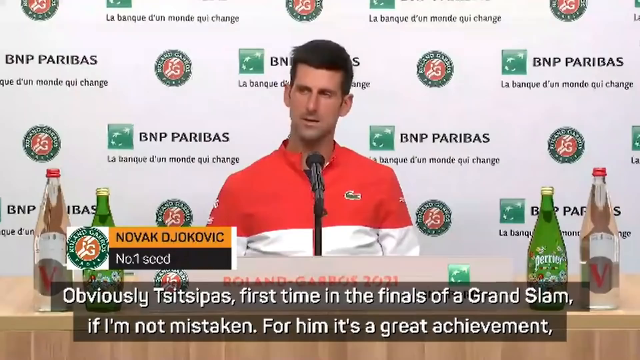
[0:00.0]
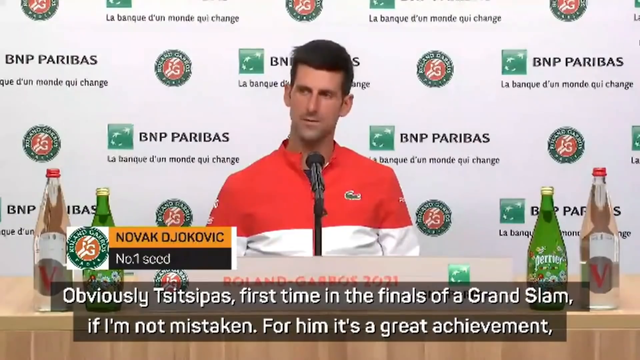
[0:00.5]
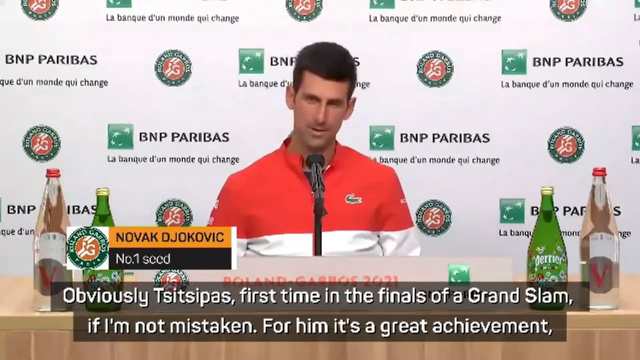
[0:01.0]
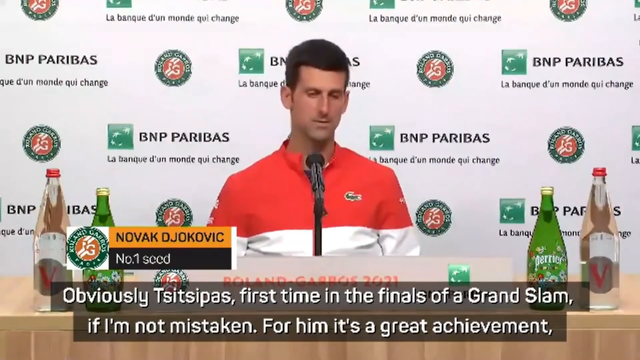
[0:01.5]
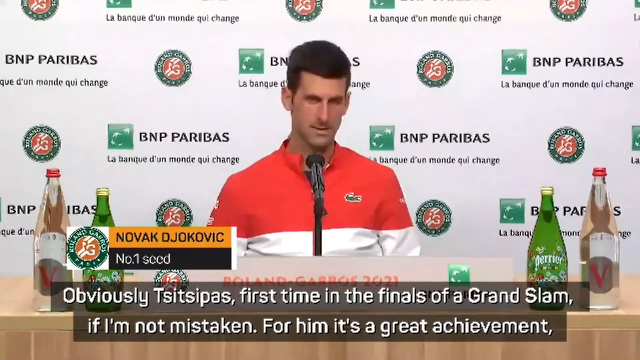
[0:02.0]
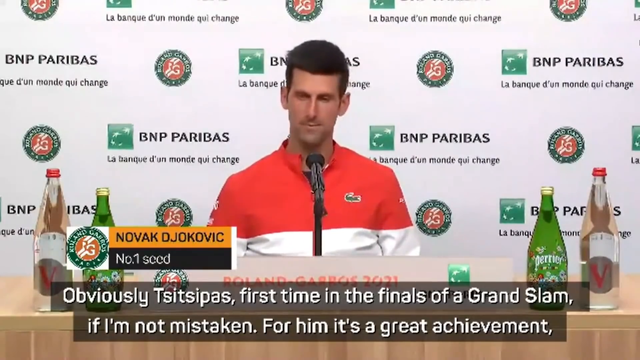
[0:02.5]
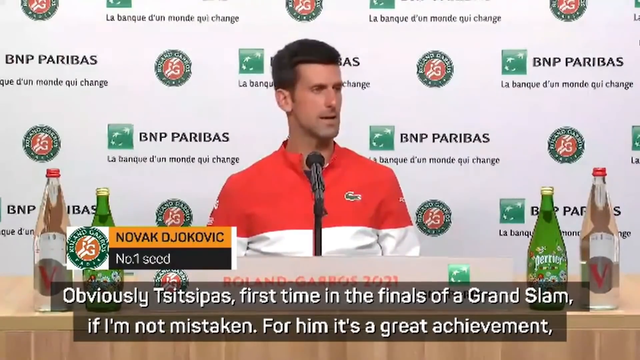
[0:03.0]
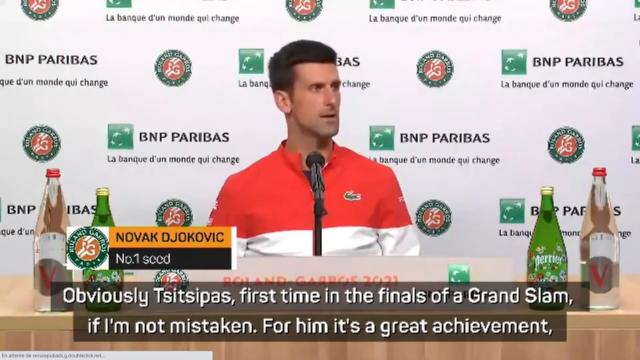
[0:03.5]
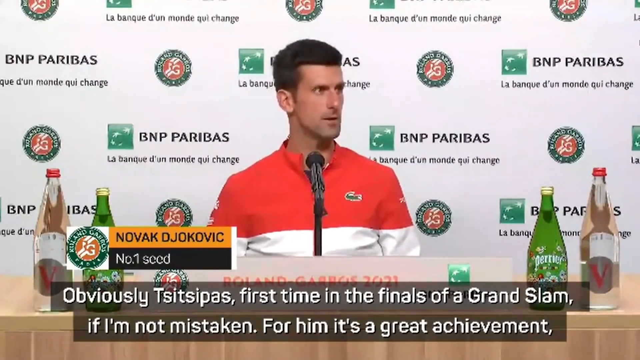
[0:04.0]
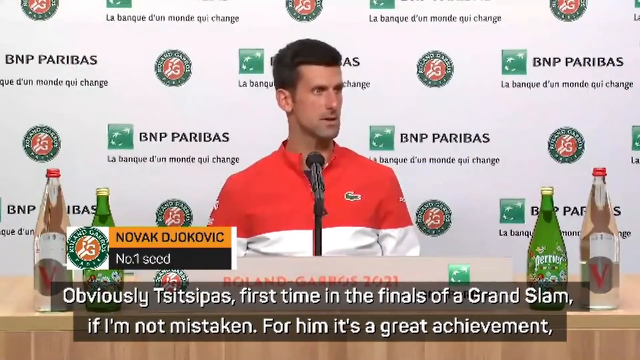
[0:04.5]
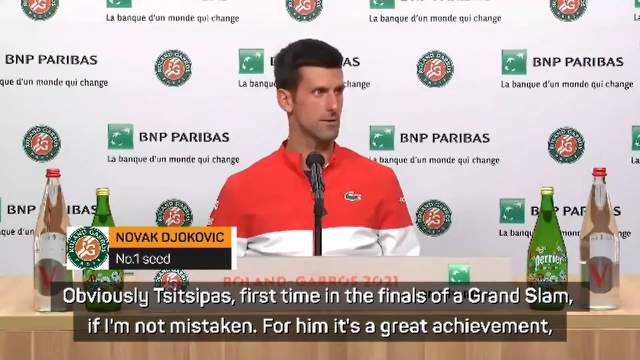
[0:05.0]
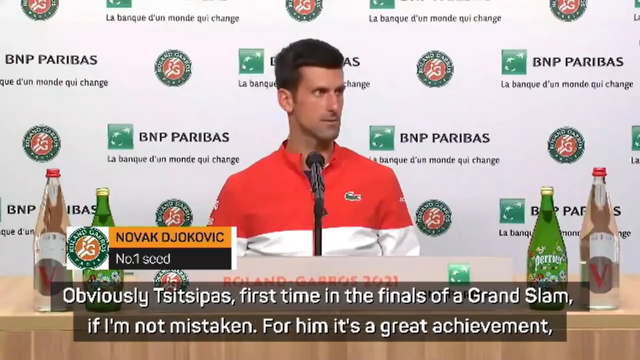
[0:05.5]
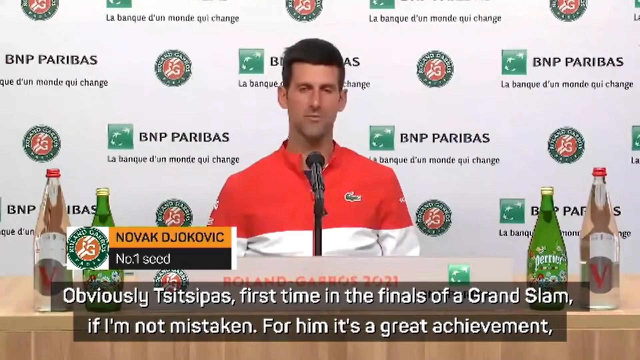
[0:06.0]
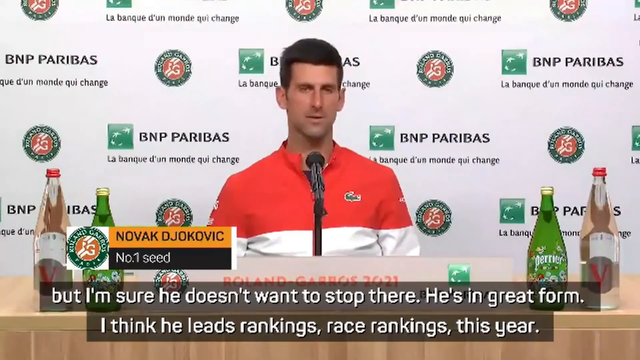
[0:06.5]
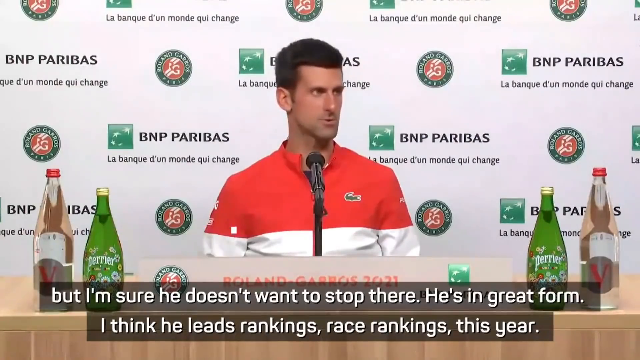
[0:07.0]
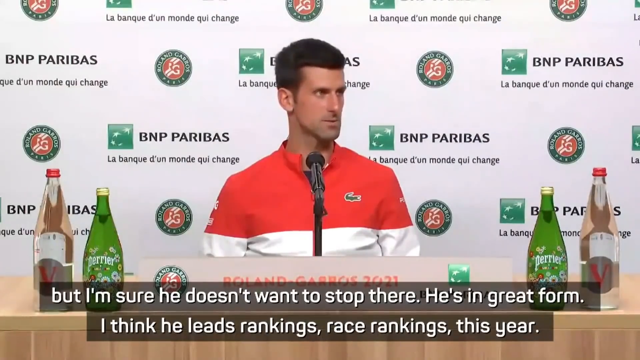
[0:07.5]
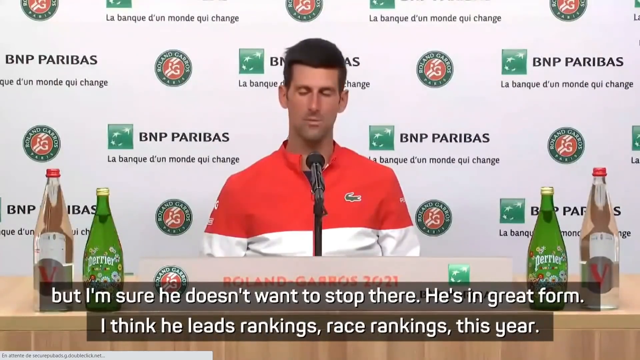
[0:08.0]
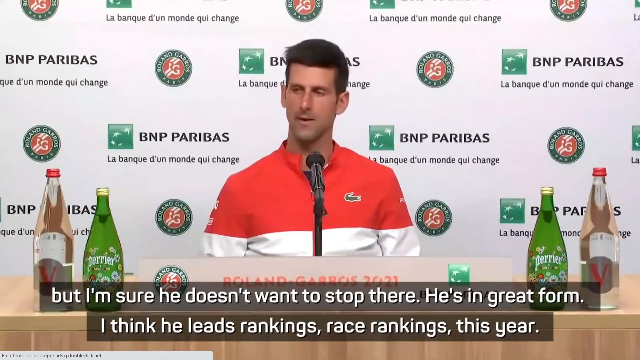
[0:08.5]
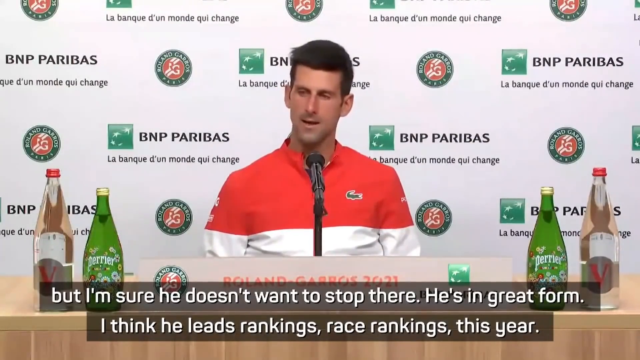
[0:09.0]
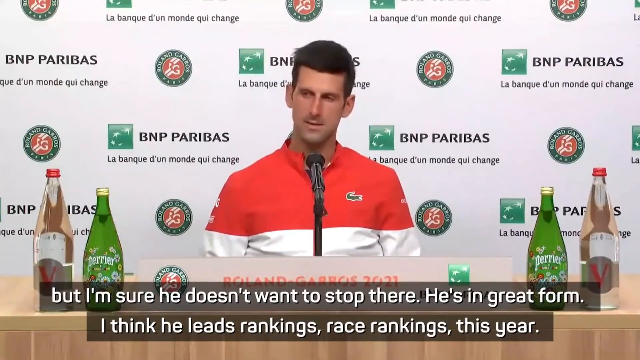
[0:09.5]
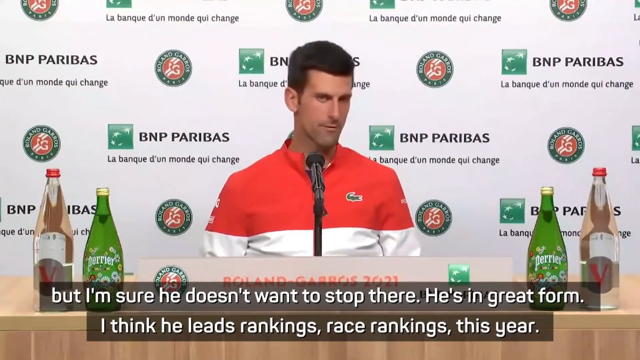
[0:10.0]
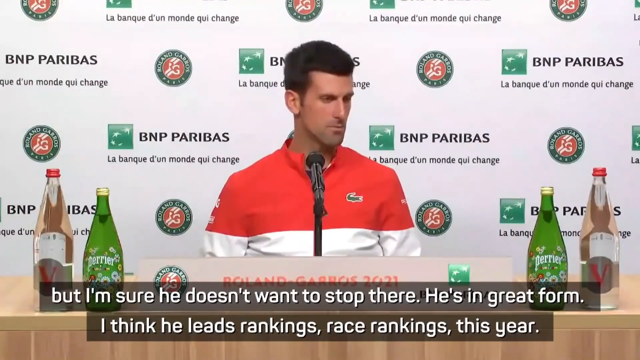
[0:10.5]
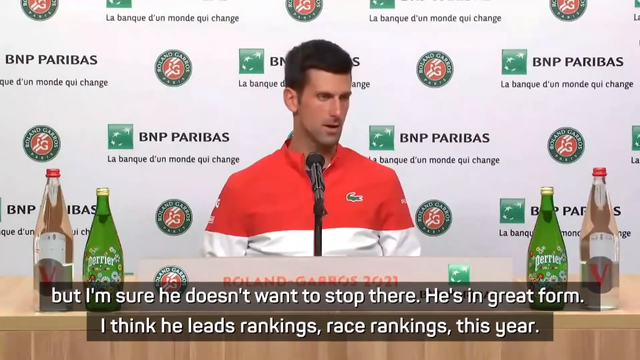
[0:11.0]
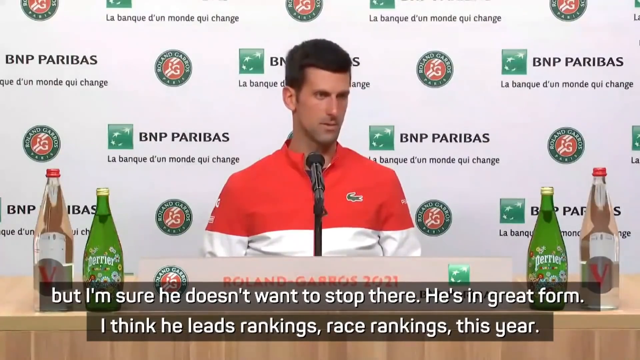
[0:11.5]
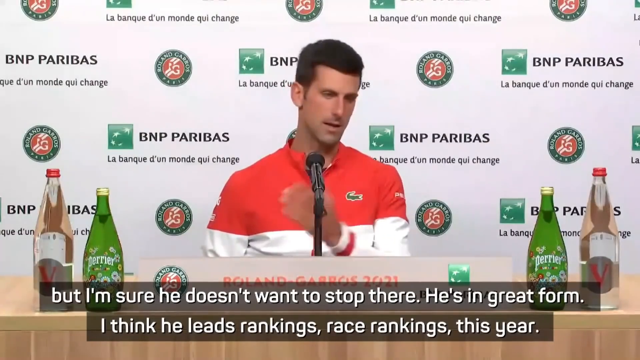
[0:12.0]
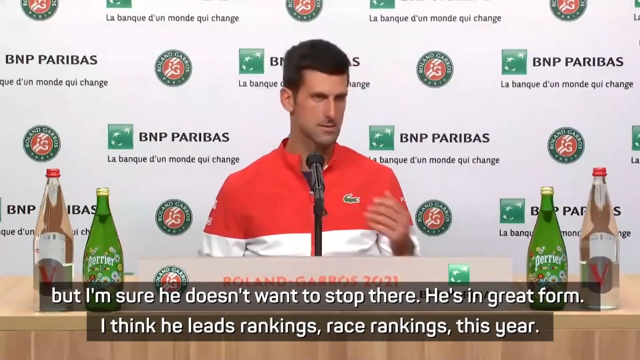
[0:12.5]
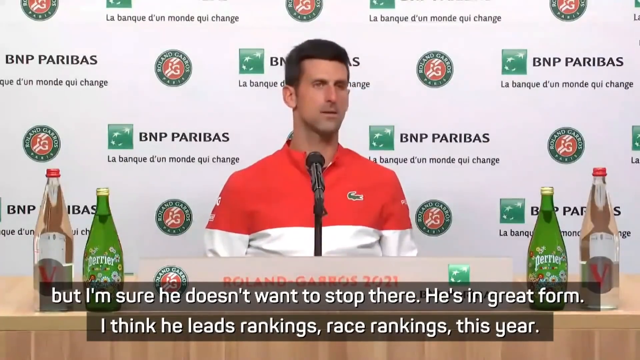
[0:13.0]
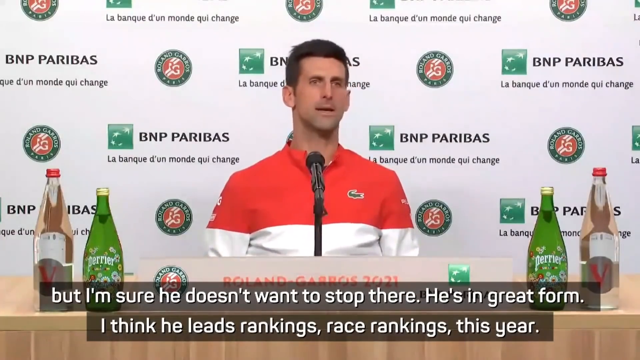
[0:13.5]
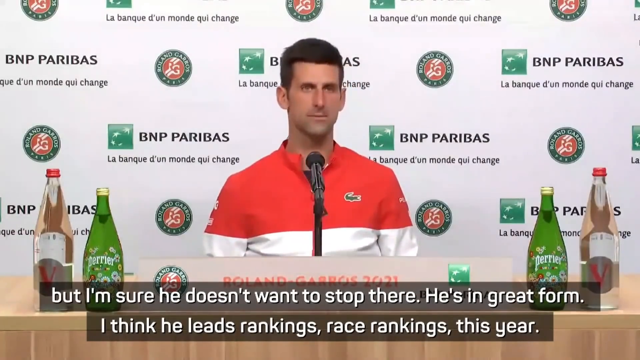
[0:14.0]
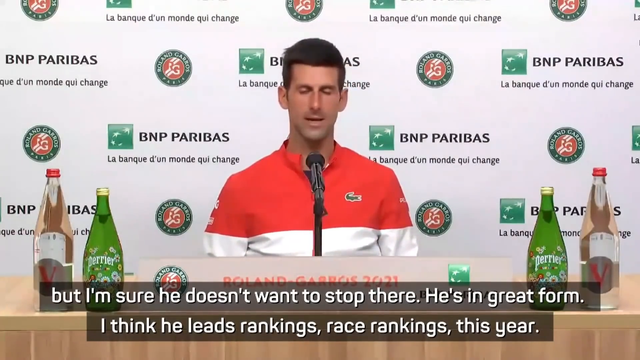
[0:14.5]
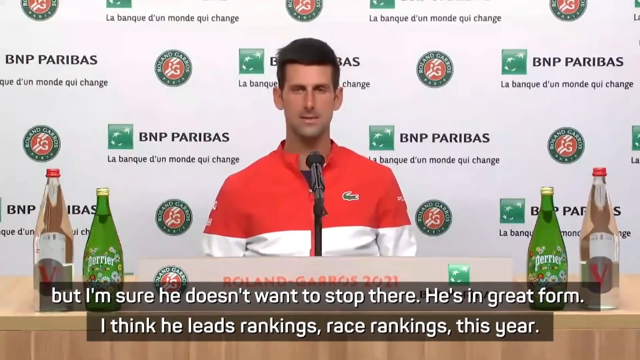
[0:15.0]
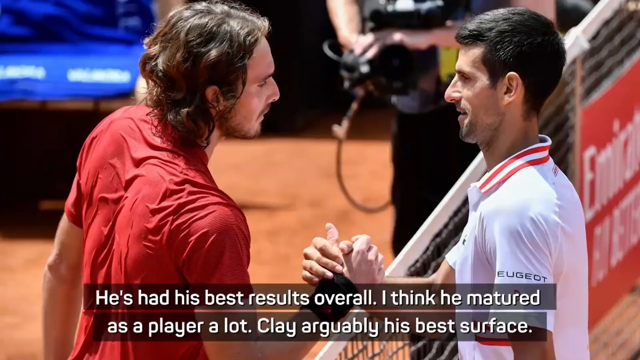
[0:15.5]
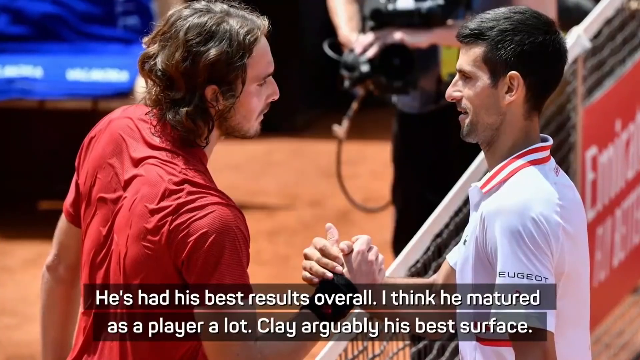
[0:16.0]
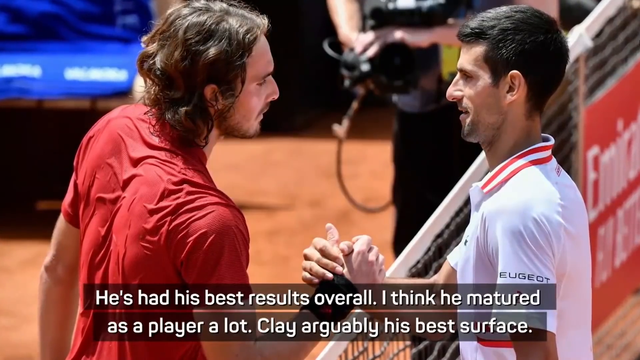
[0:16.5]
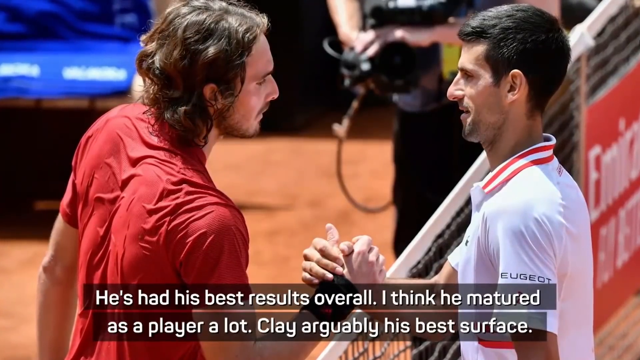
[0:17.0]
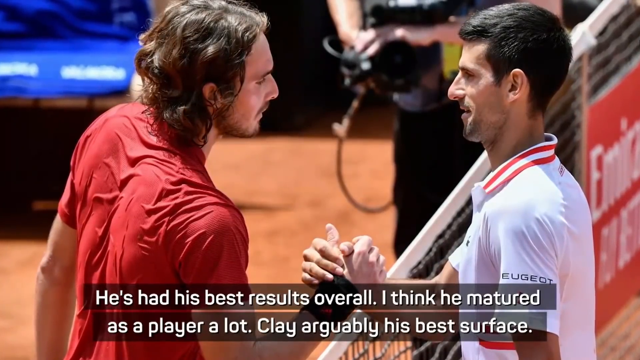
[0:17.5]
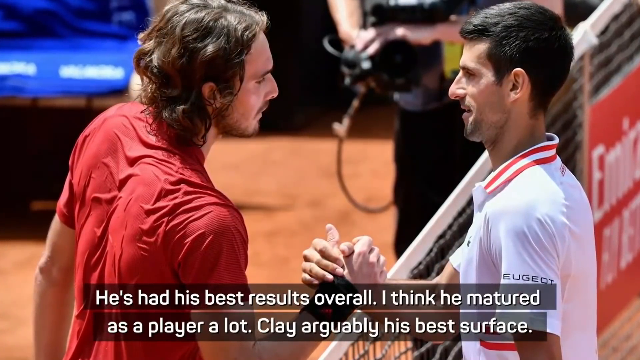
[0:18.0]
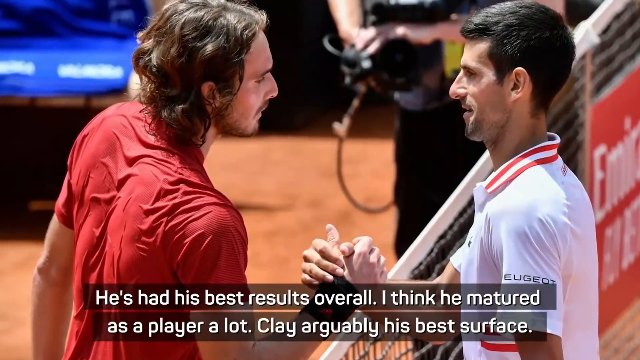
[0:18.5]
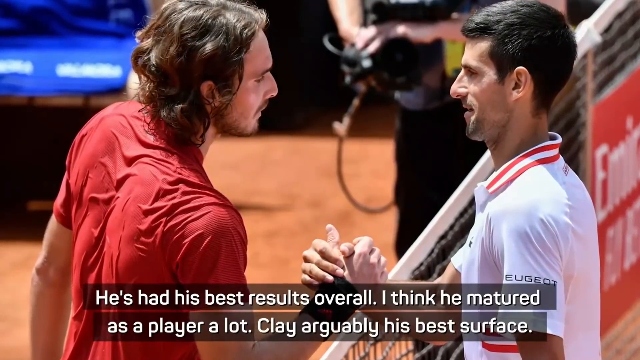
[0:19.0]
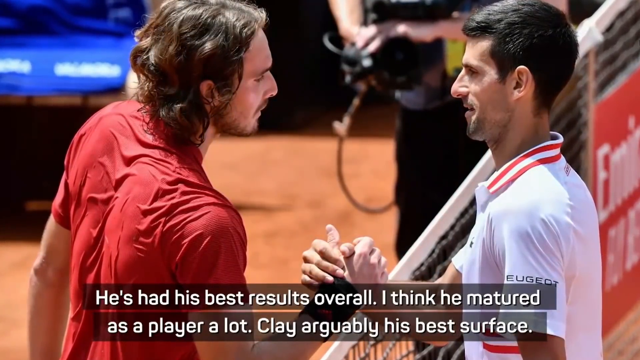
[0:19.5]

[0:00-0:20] A man wearing a red and white sweater with what appears to be a crocodile logo on his upper left chest (upper right as viewed) sits at a table with a microphone on a stand in front of him. He has kind of dark, kind of cropped hair. Several bottles of beverages are on the table around him. Behind him is a white background with a print of some logos in a language that is not English. He speaks while looking out into the crowd, looks to the left and to the right, and gestures with his left hand as he talks. Then a still image shows this man kind of grasping right hands with his opponent, who wears a red shirt and has dark hair that is more brown, a little more wavy and longer than the first man's. They look like they are clasping hands over a tennis net.